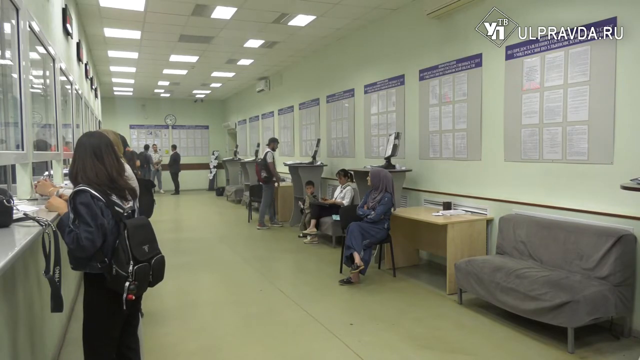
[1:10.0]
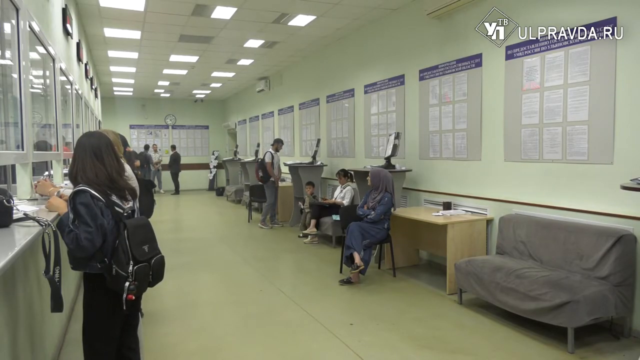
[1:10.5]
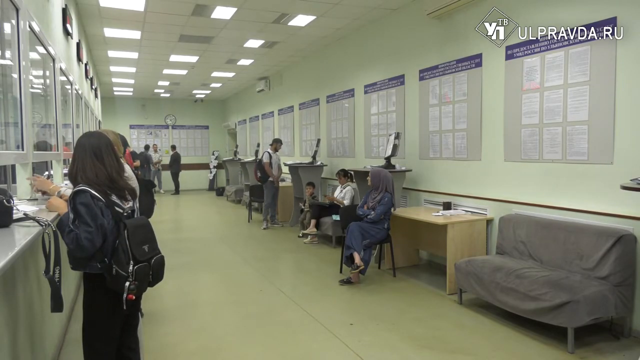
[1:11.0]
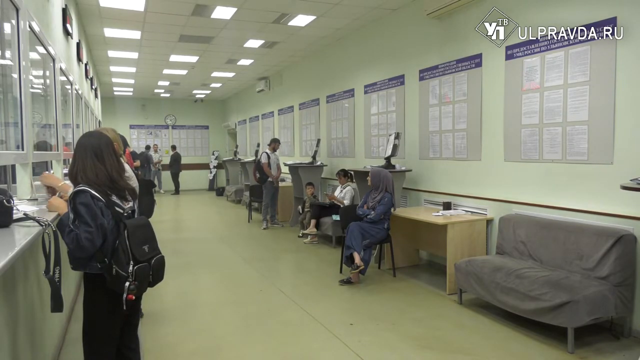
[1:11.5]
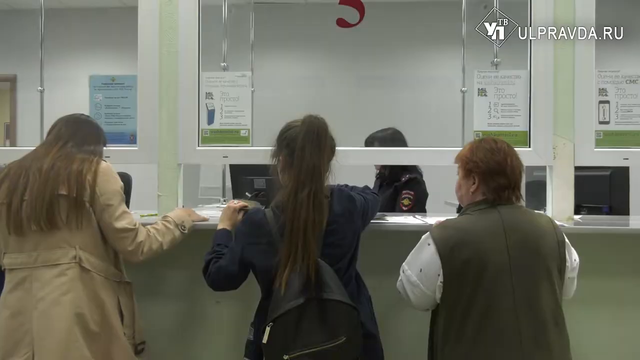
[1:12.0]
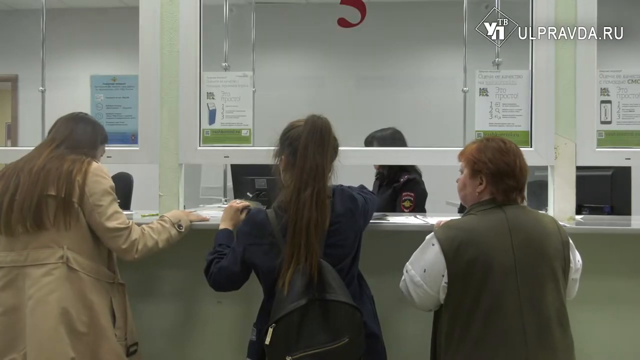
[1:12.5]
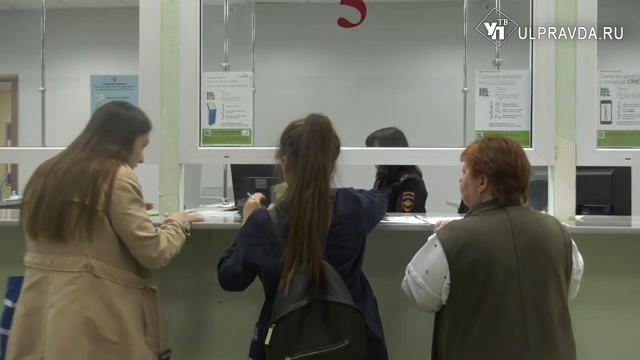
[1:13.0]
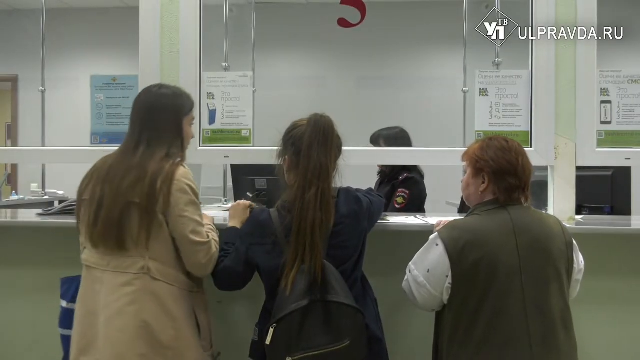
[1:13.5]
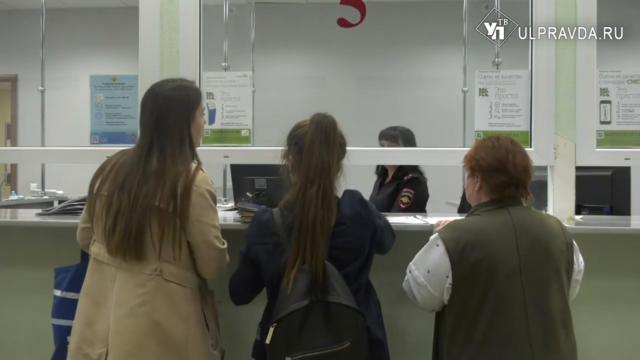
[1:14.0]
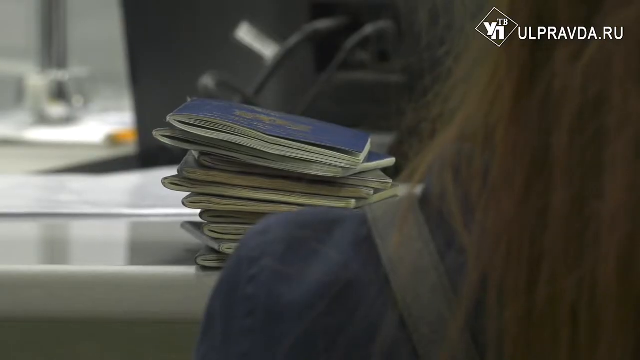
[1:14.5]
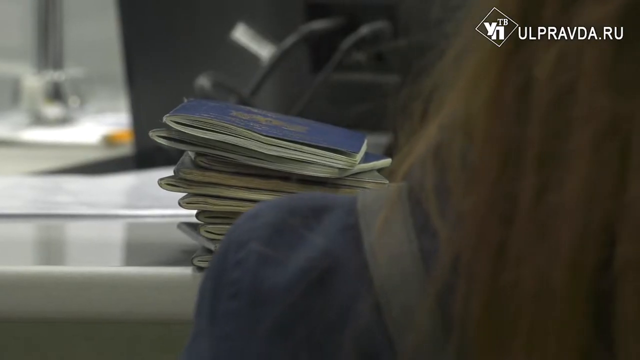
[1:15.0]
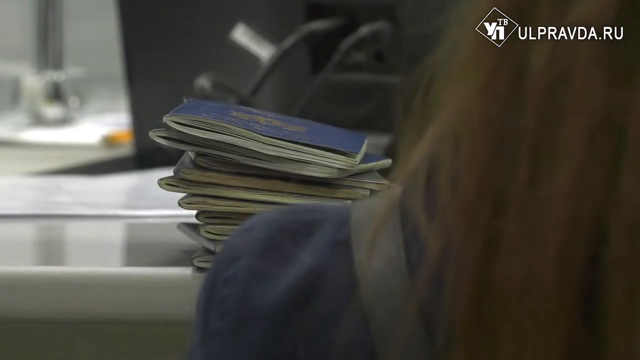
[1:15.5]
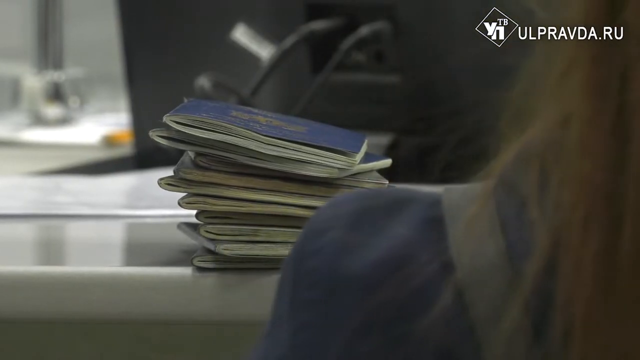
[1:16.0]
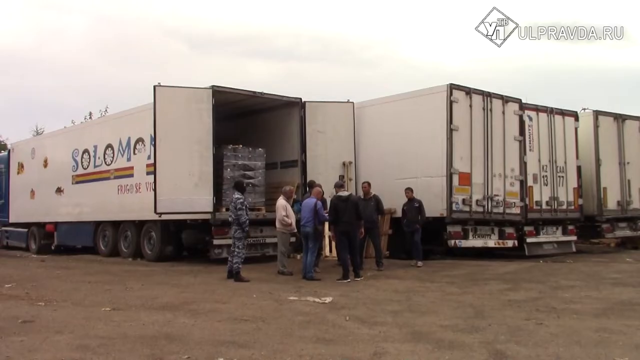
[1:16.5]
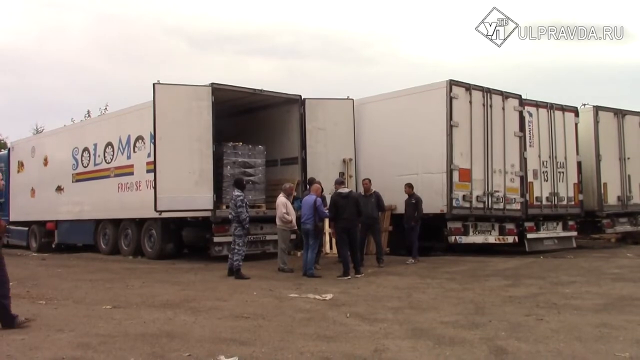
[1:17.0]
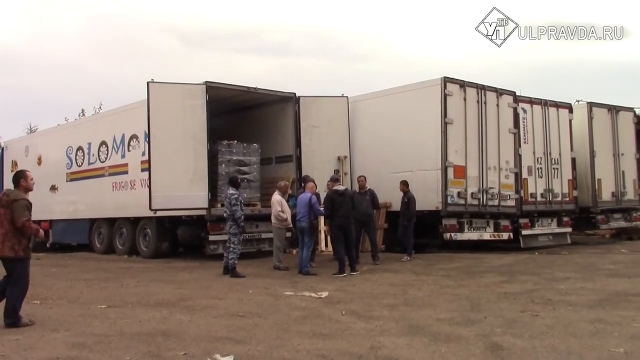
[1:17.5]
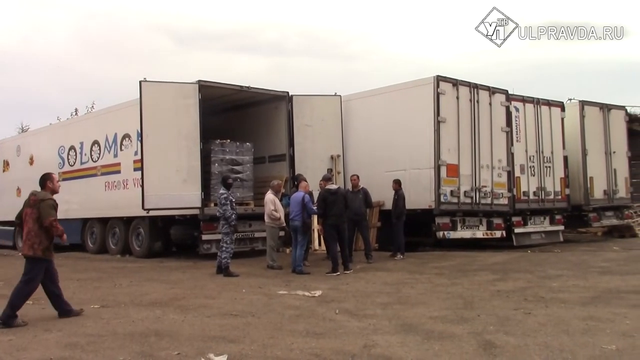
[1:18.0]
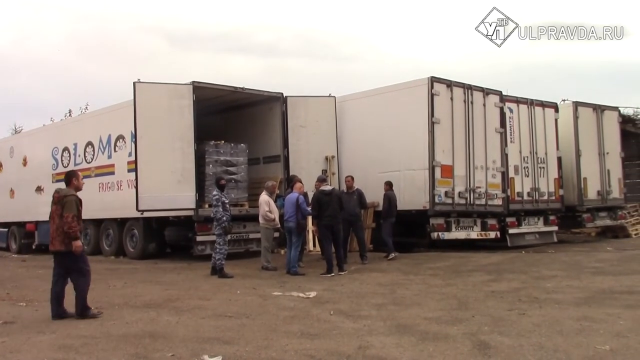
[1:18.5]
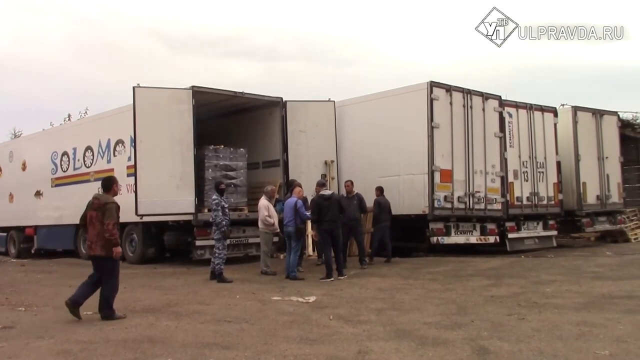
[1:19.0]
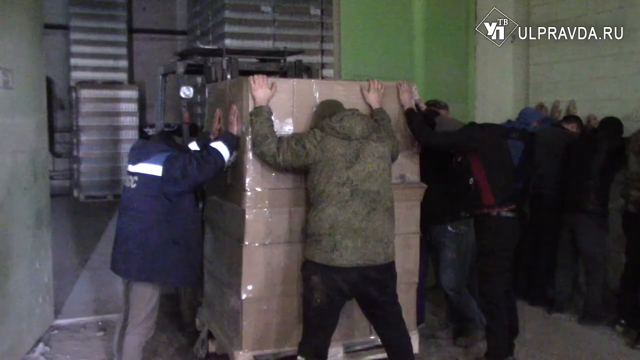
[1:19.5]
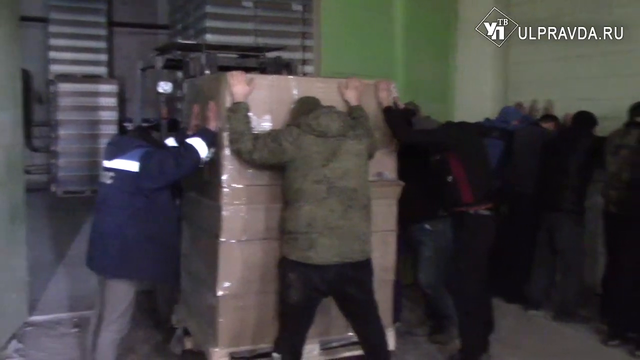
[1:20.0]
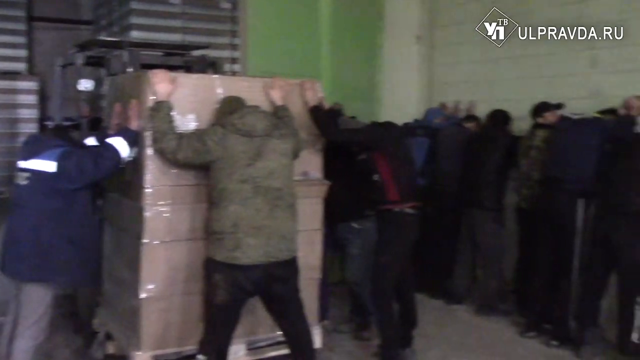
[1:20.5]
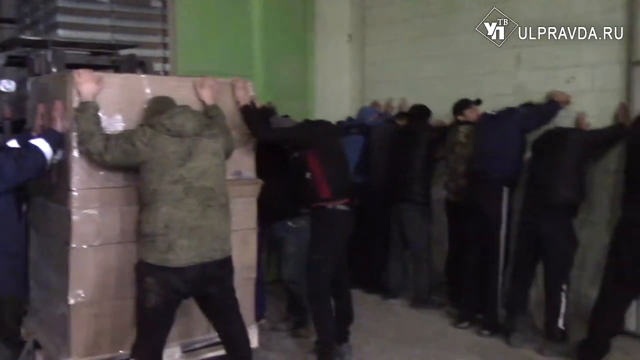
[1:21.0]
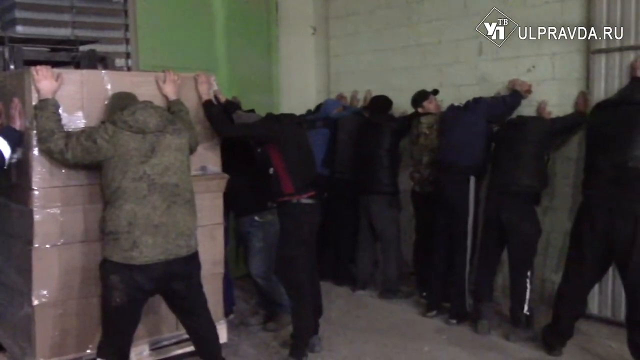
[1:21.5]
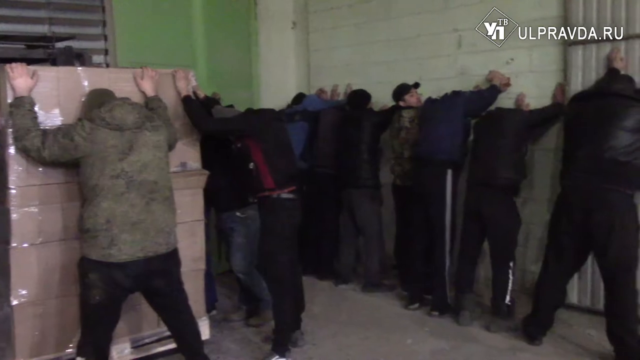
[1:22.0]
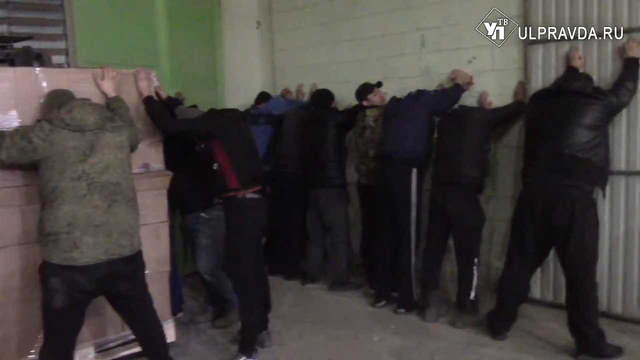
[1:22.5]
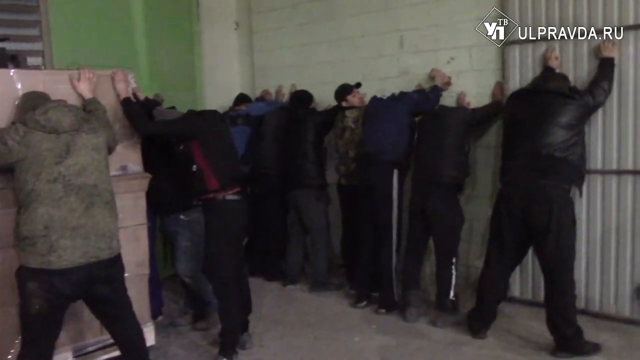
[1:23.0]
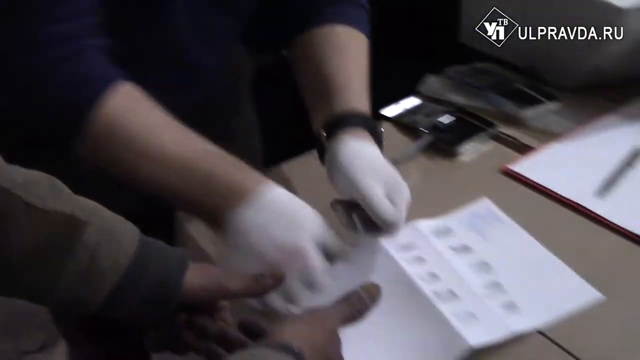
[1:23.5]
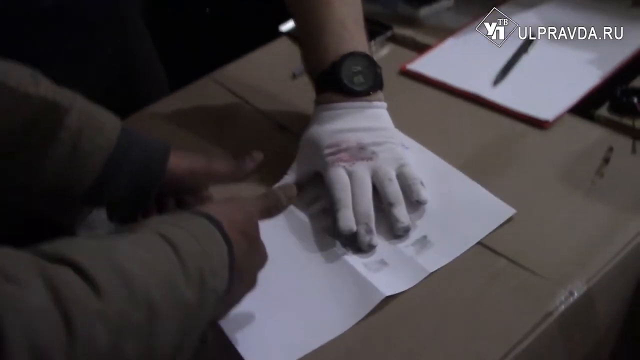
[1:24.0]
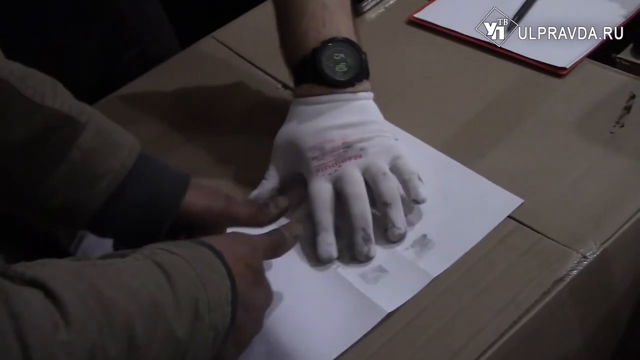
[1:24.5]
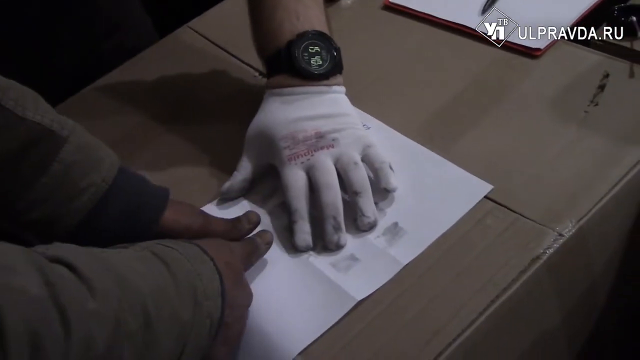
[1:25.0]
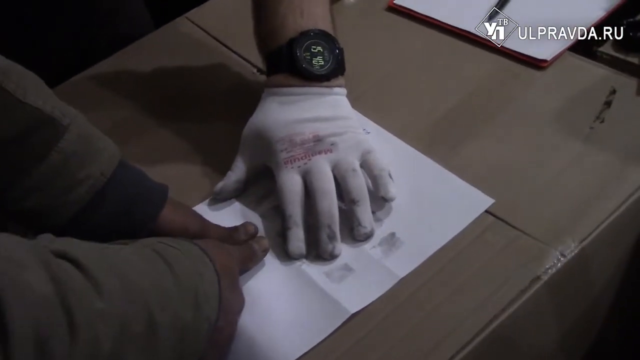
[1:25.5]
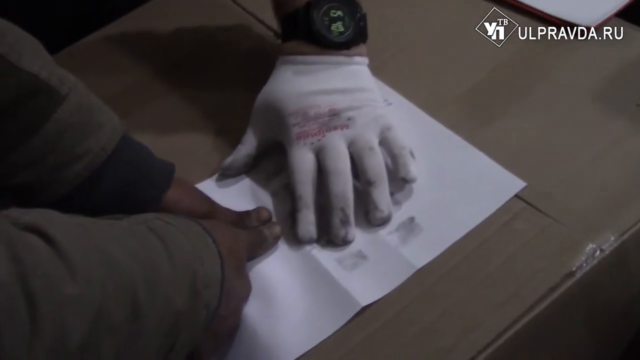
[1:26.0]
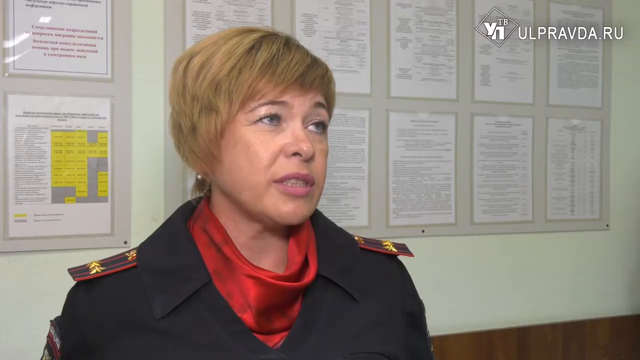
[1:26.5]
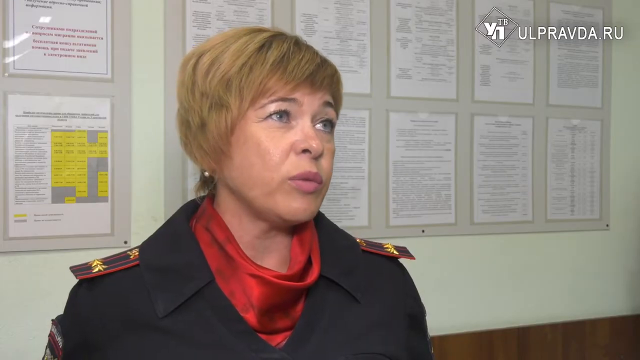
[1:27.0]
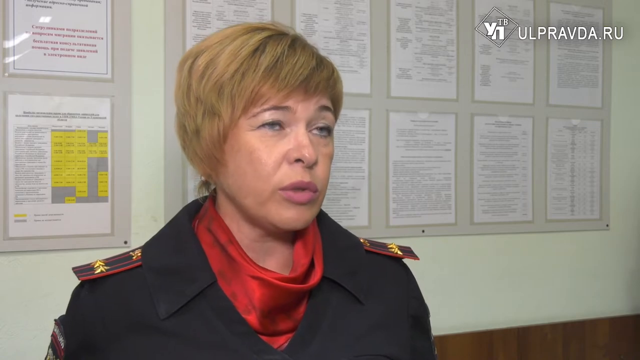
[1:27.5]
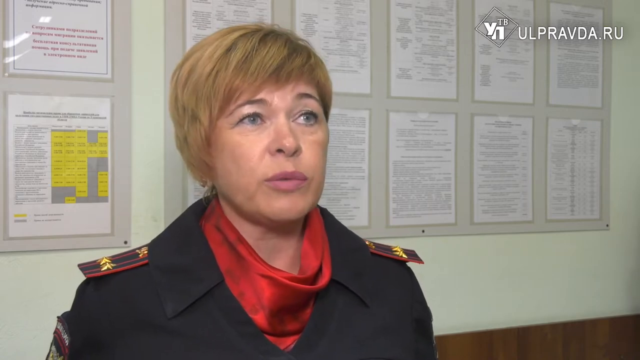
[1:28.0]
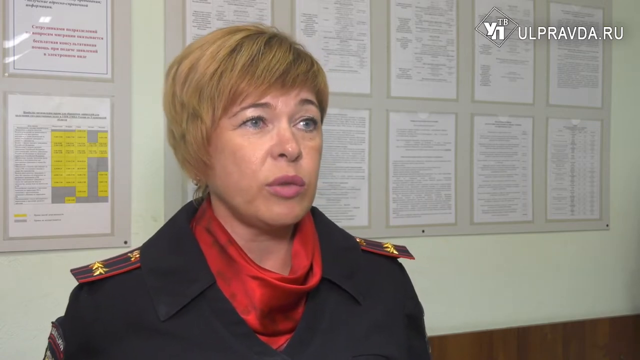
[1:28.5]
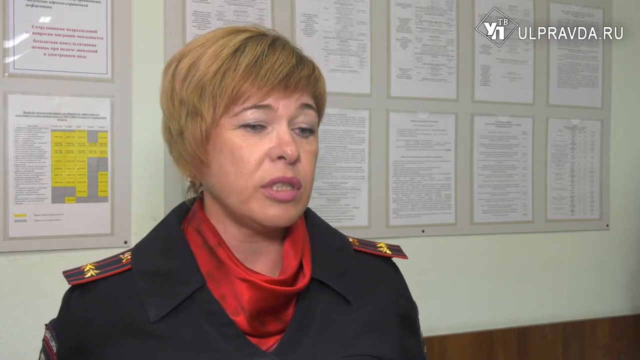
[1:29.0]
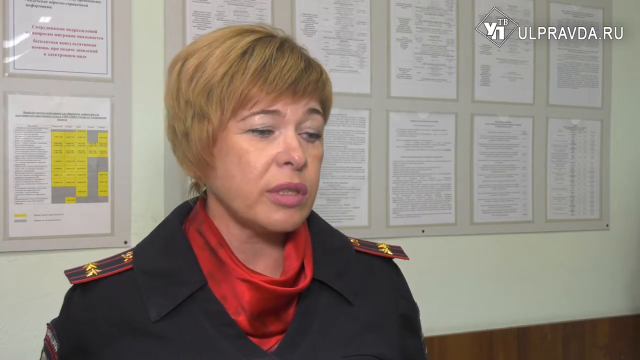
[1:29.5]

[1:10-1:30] People wait in an area where others sit behind a desk, waiting patiently to have their information processed. The scene quickly changes to several trucks, where people wait with their arms against the wall, and then people have their fingerprints checked. The process appears to be a rigorous identity verification involving fingerprints and possibly passports, likely connected to the Russian government and involving police.